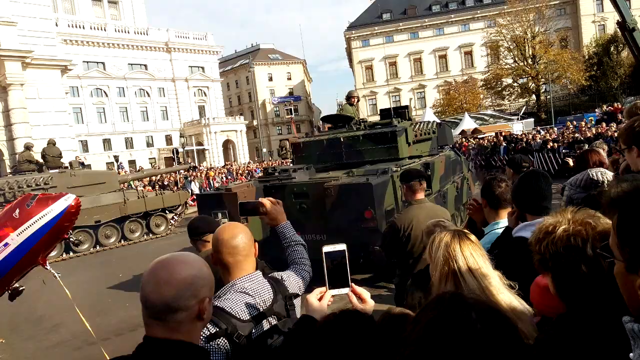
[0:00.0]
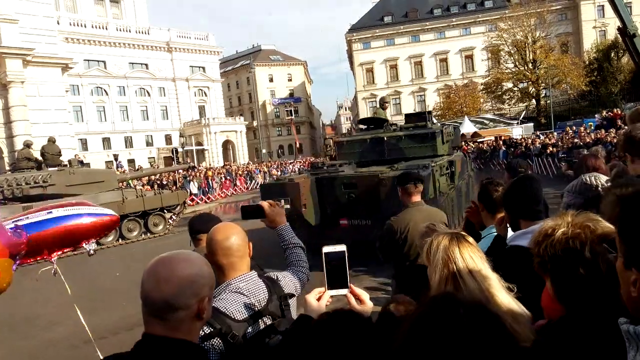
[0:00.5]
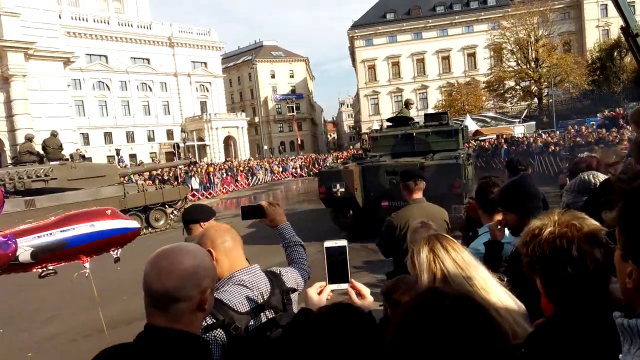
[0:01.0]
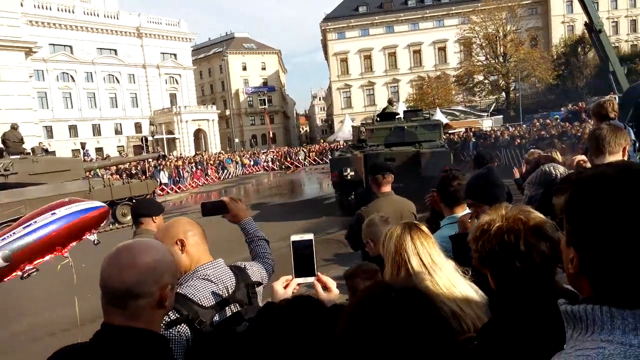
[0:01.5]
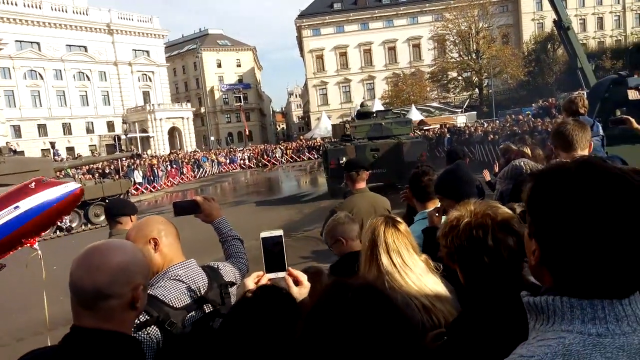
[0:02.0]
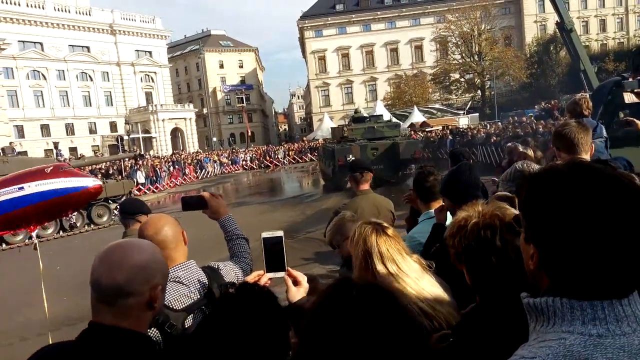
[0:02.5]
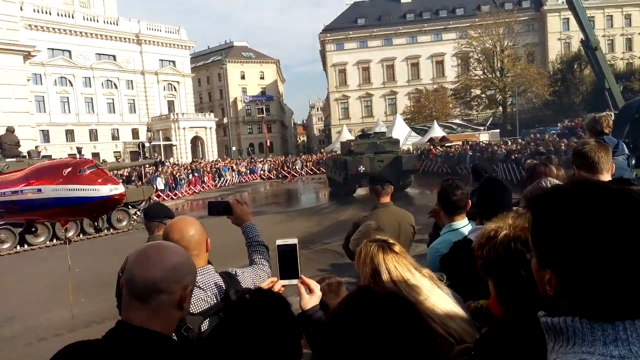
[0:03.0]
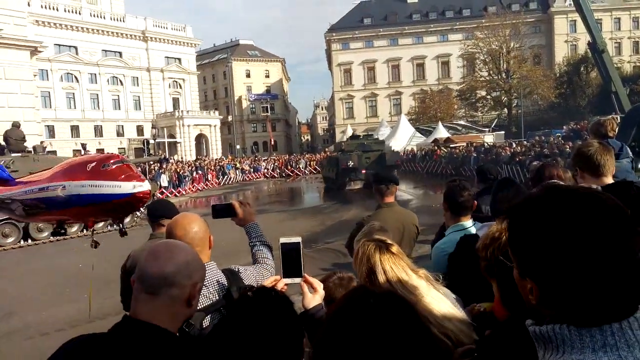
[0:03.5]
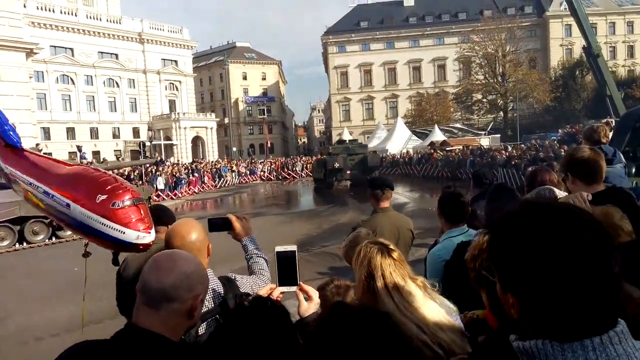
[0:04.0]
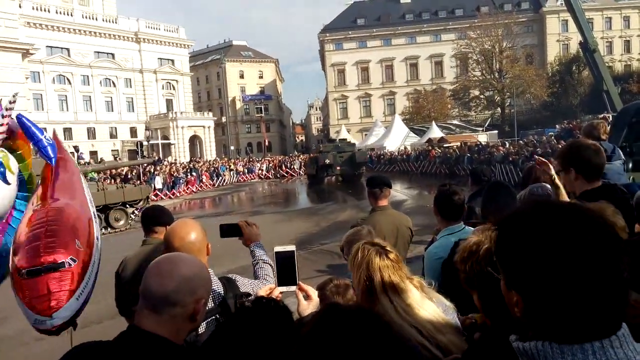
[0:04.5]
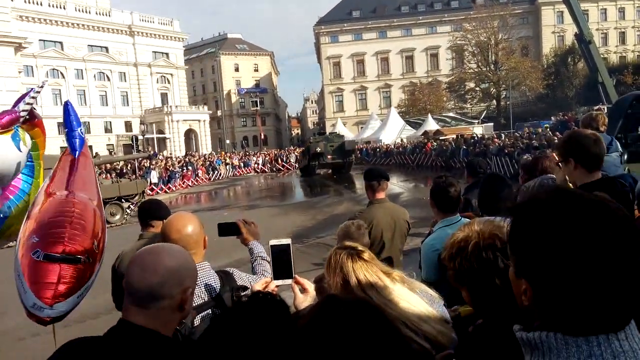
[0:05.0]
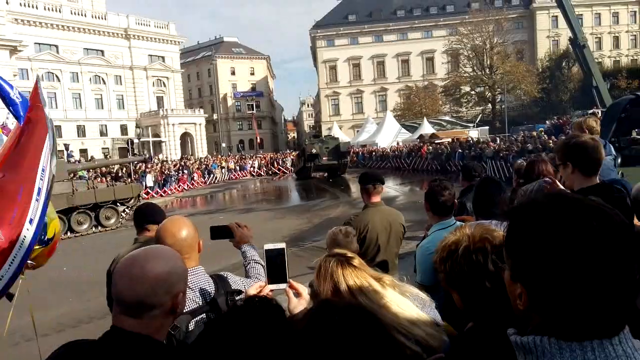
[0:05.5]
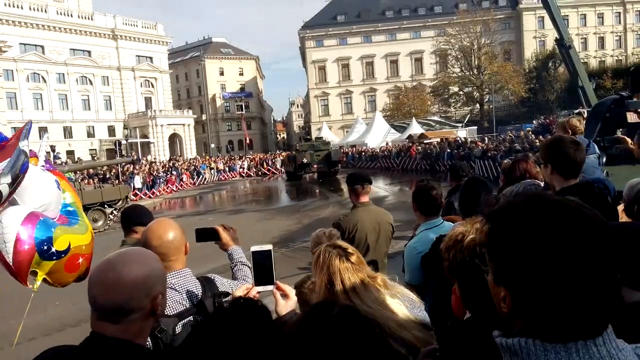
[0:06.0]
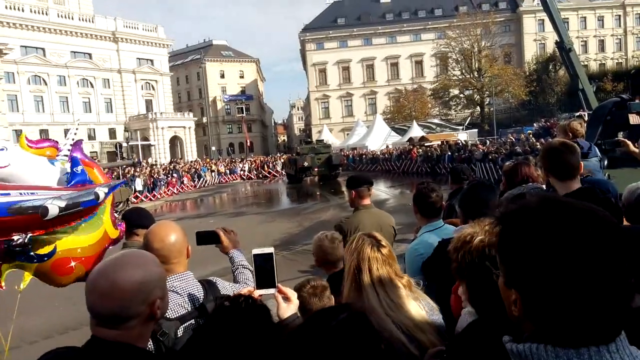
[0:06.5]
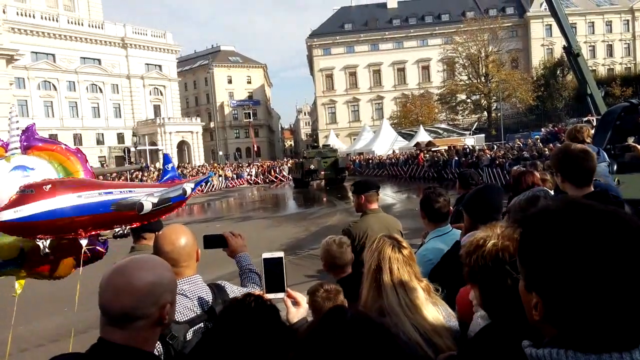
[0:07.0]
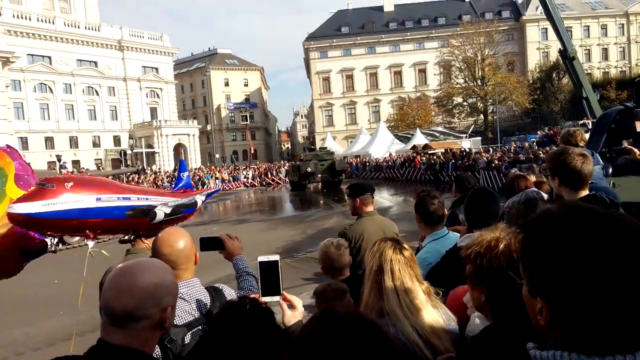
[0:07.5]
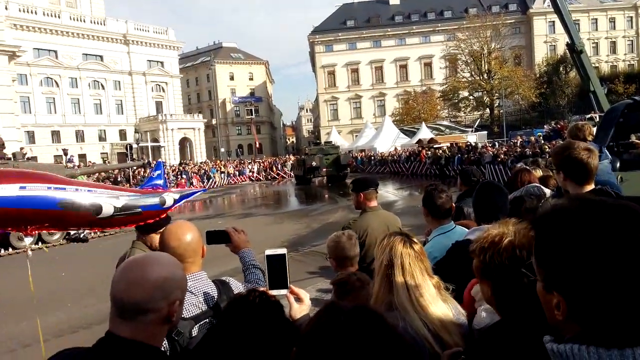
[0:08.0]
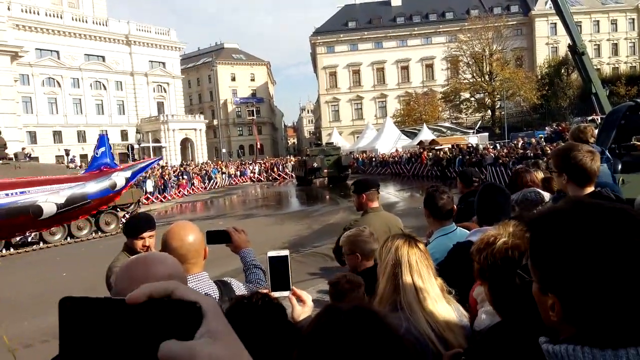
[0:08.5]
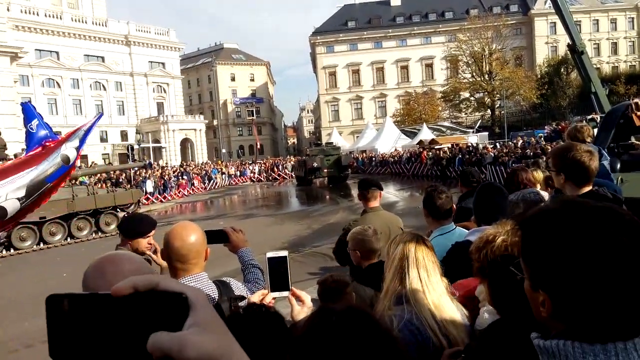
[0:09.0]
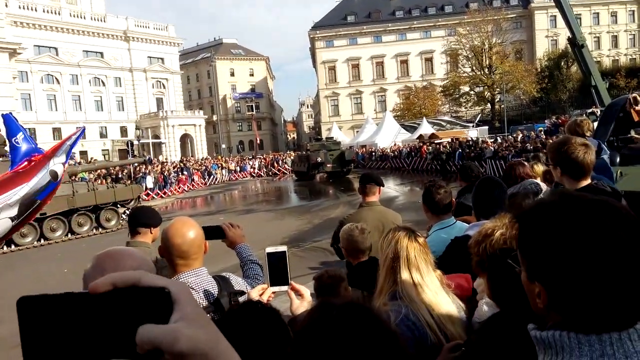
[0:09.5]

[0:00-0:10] A crowd of people gathers at a military parade in a town centre on a clear, sunny day, with some rather grand white buildings in the background. There are two tanks and a red, white and blue balloon in the shape of an aircraft. One of the tanks proceeds along the road and then turns around at the end. A number of people in the crowd are filming on their phones. The crowd is quite numerous and has formed on both sides of the street. At the end of the street there is a marquee of some sort, suggesting there may be some stalls.